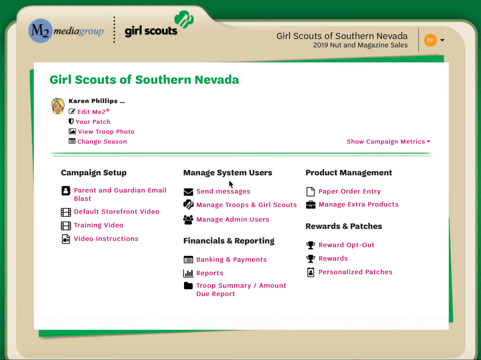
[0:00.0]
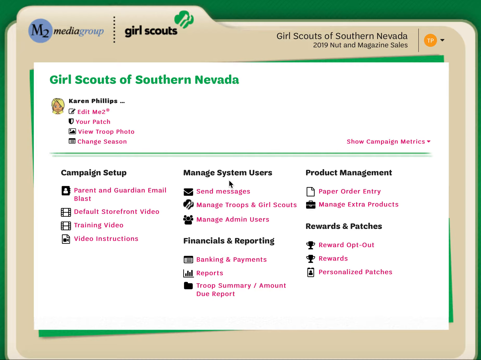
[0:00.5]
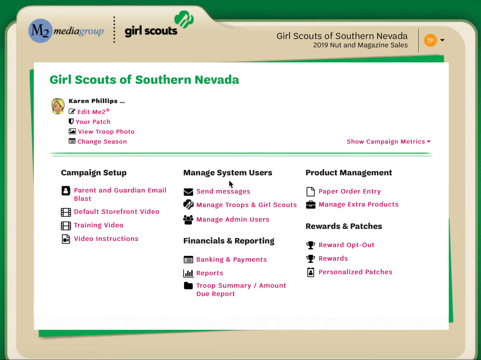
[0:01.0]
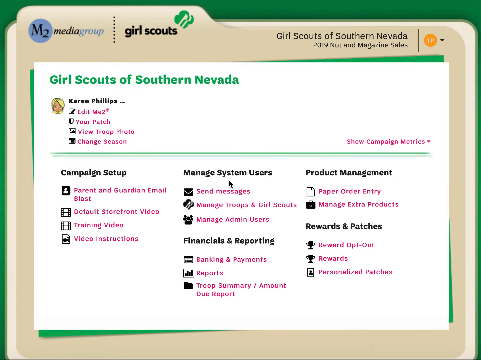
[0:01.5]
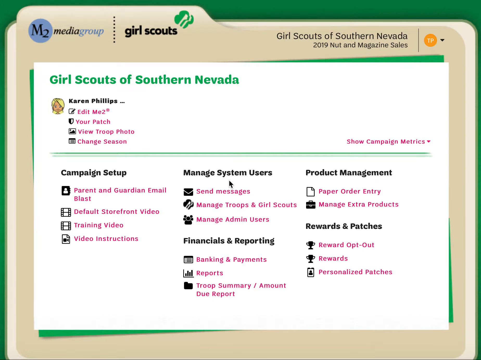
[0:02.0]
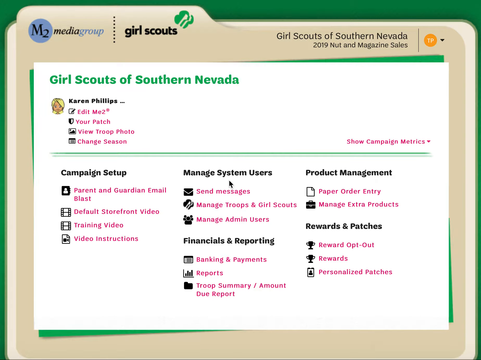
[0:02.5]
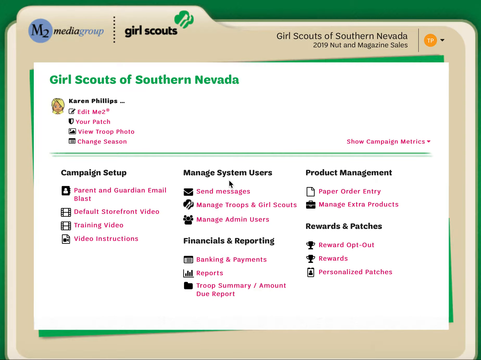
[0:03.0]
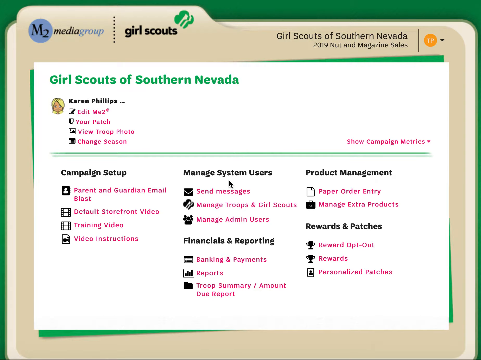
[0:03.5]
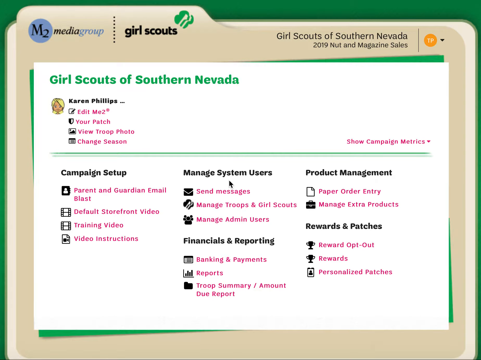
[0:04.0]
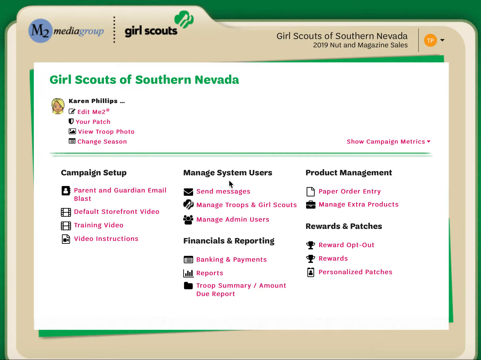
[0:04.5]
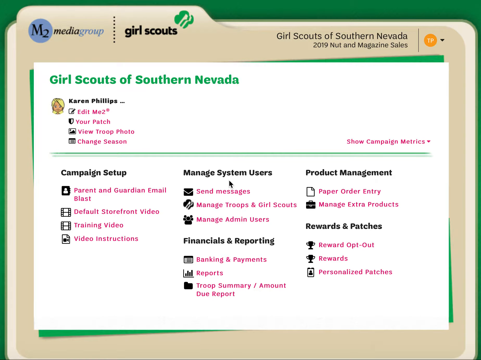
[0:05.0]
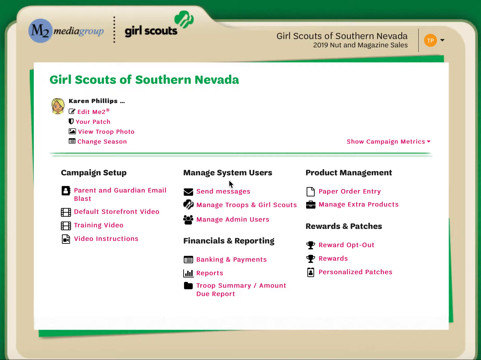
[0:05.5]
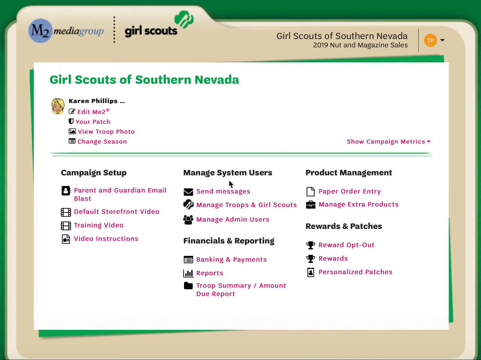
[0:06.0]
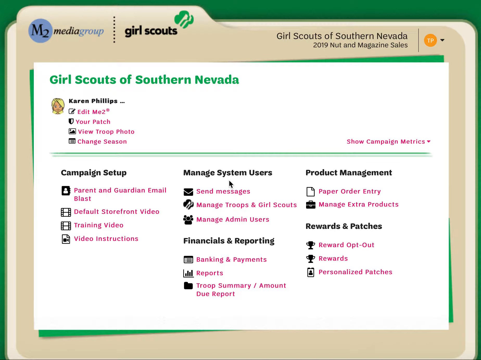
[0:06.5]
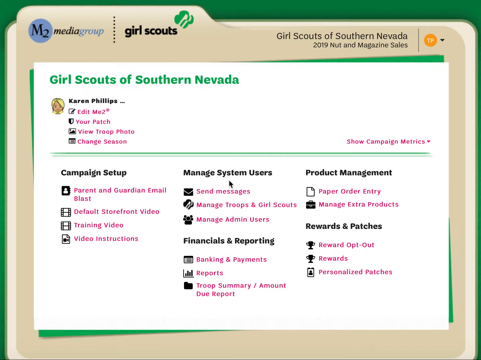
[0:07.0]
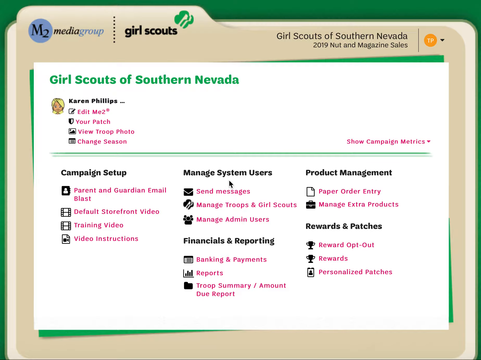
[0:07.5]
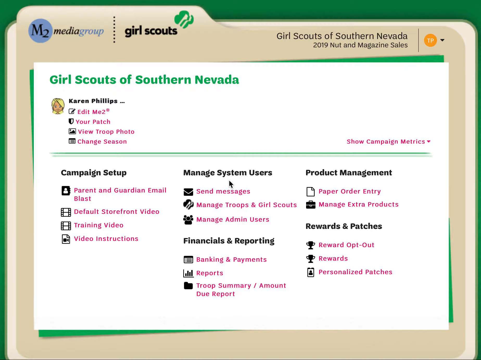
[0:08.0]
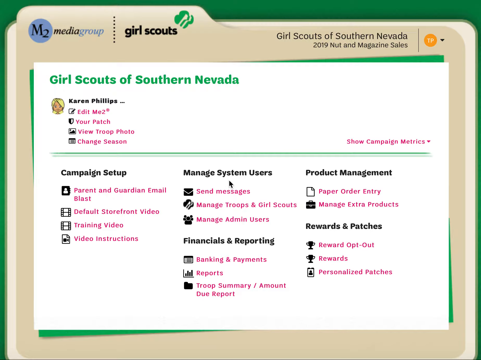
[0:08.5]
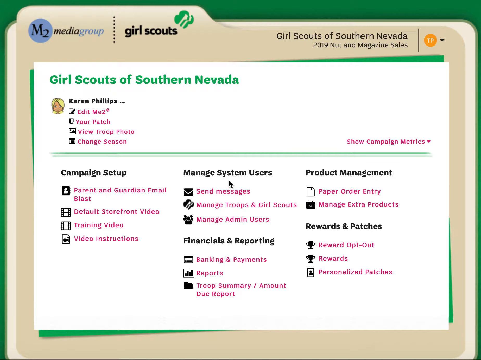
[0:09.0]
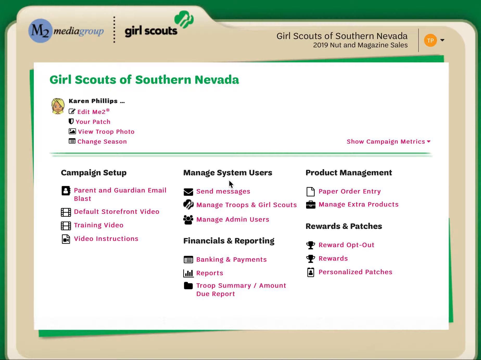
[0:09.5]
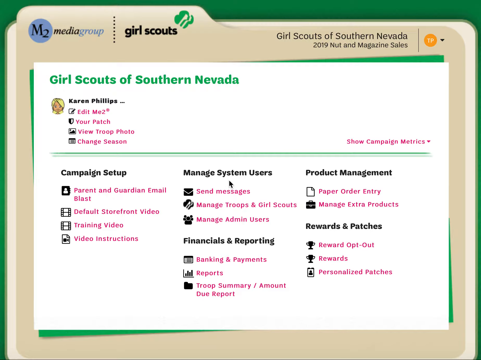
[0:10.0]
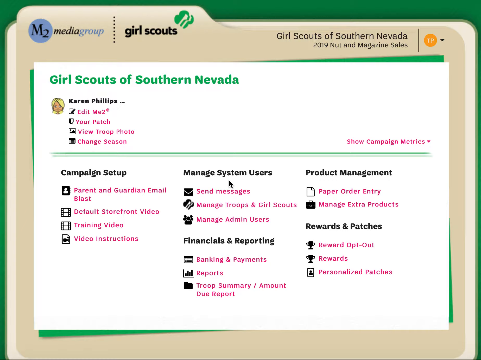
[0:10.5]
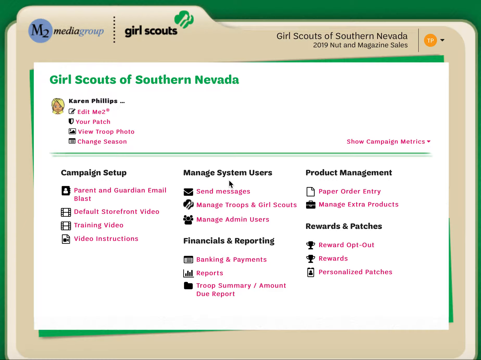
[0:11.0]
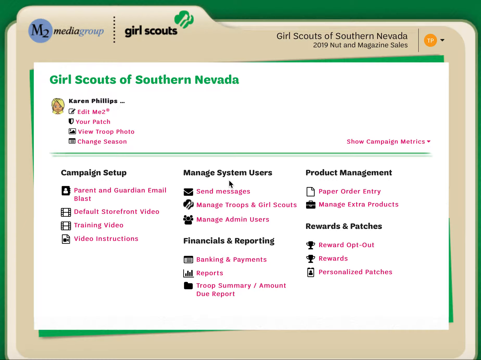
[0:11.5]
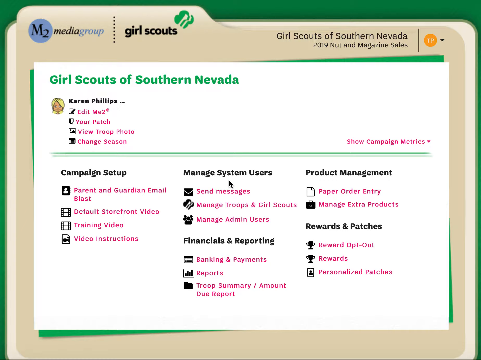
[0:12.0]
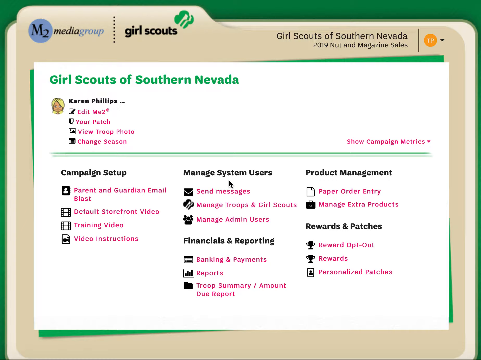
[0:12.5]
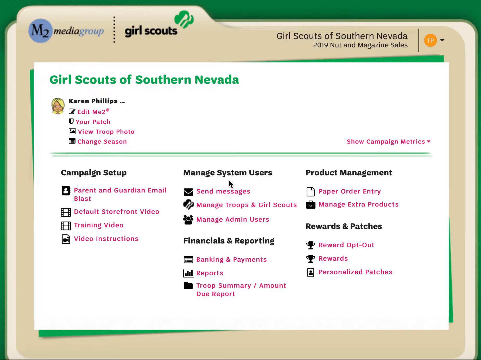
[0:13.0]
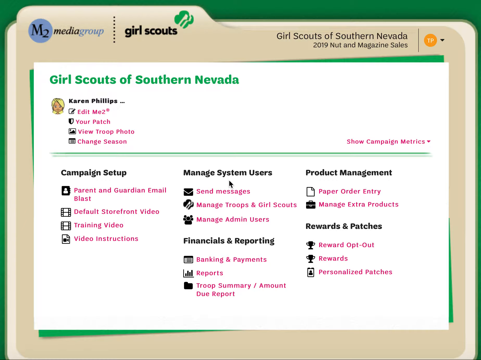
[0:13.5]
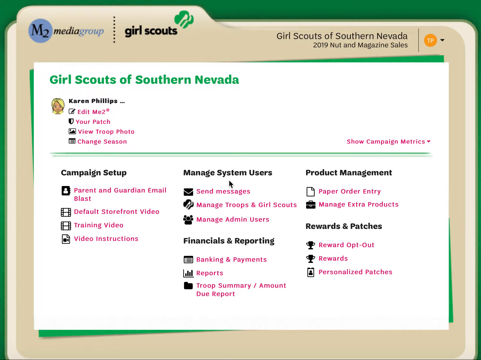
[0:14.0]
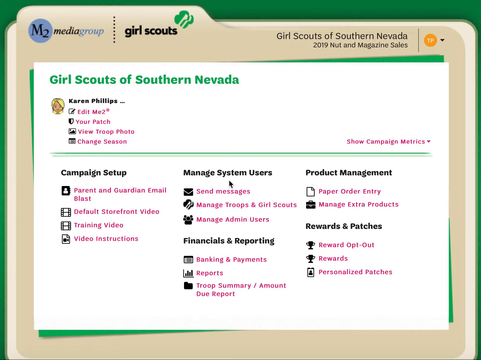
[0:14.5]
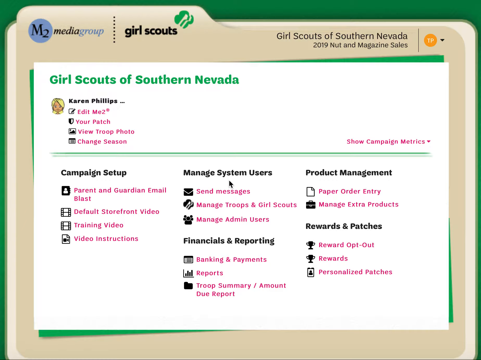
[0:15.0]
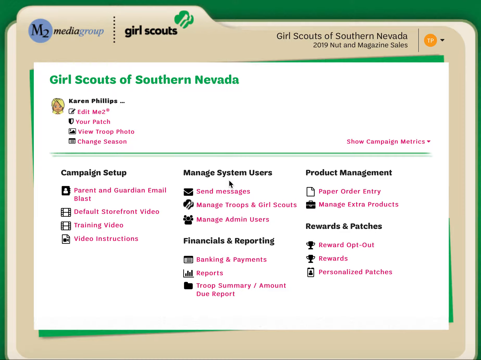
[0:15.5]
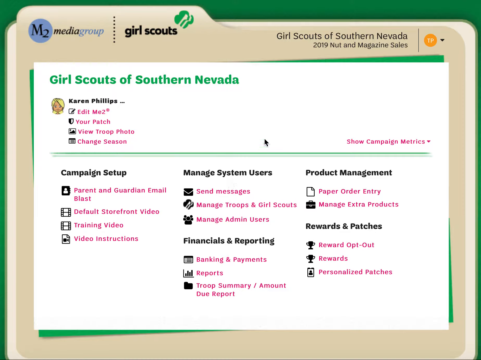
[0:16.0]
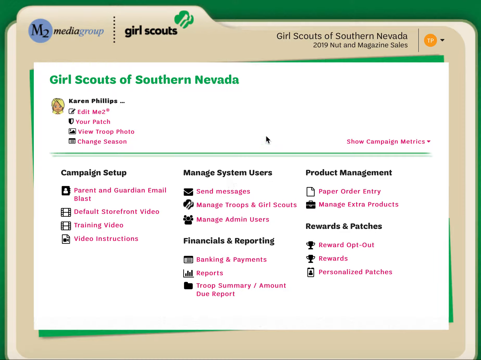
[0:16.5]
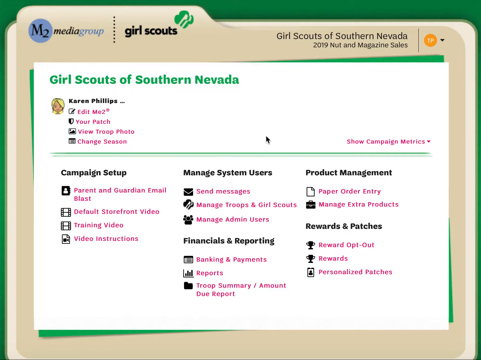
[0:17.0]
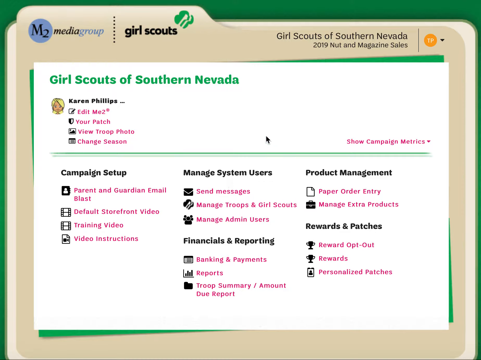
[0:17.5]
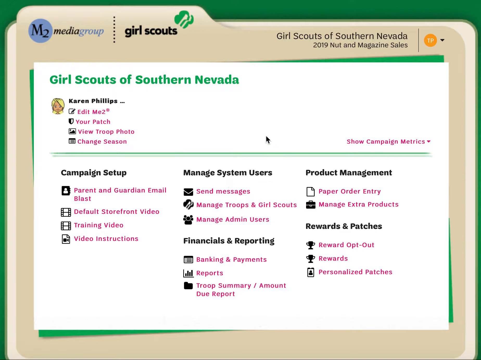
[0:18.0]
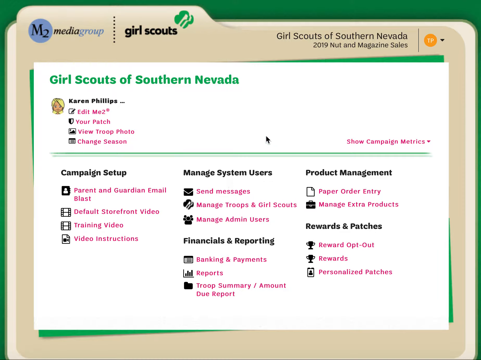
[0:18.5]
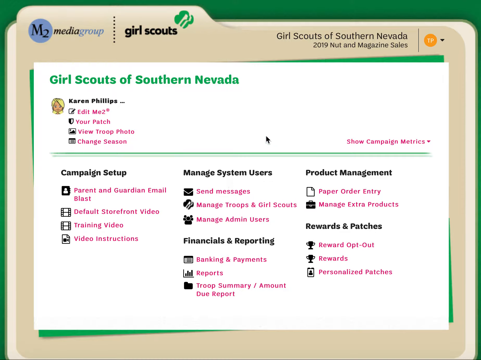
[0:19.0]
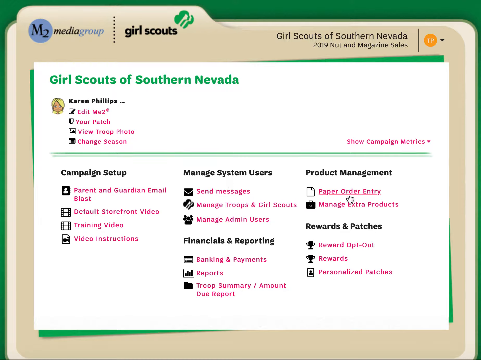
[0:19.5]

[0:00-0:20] A large folder fills the background, and many boxes of text are written over it. On top of the folder there is text in the top left, smaller text in the top right, and a main green title written on a square rectangle in the center middle of the screen. Multiple text options are written small in pink, with smaller subtitles scattered around. The main title reads "Girl Scouts of Nevada". At the top is an M2 Media Group logo, and to the right of it, still in the top right, is a Girl Scouts logo. On the right side another title reads "Girl Scouts of Southern Nevada 2019 nut and magazine sales". Subtitles in the center of the screen read "campaign setup", "manage user systems", "product management" and more. A computer mouse cursor is in the exact center of the screen; it moves slightly from the middle to the right side, hovering over a link.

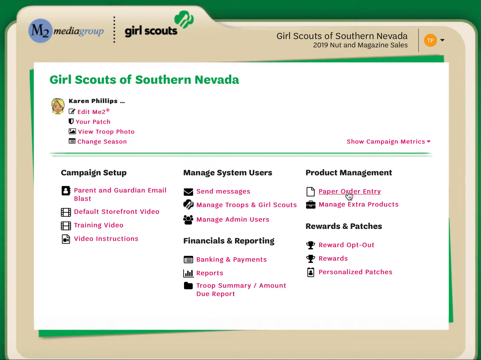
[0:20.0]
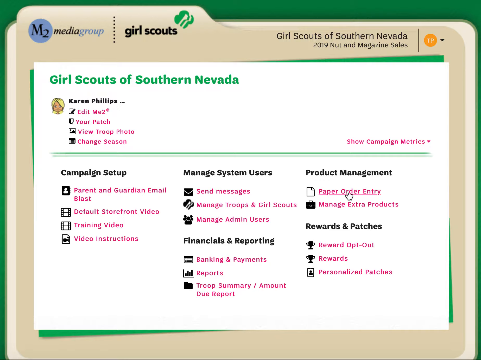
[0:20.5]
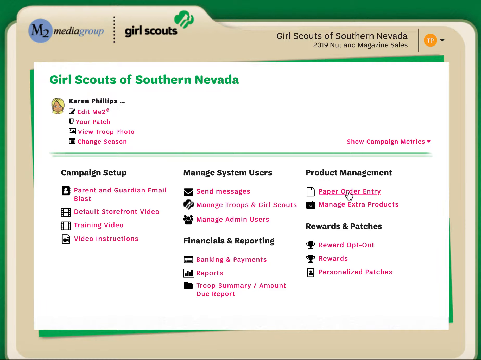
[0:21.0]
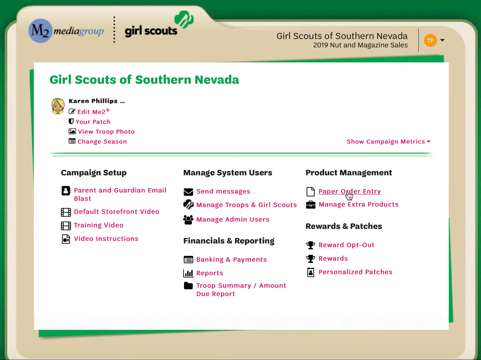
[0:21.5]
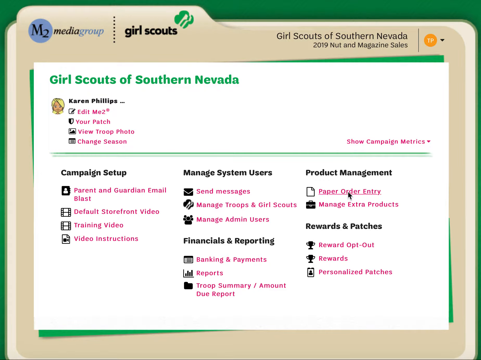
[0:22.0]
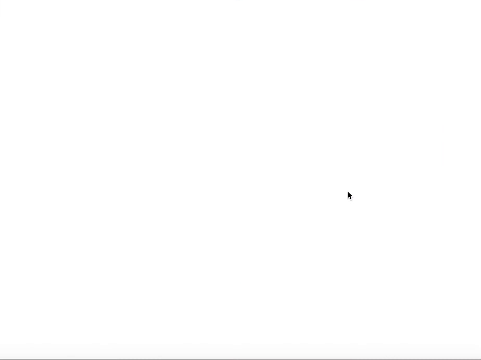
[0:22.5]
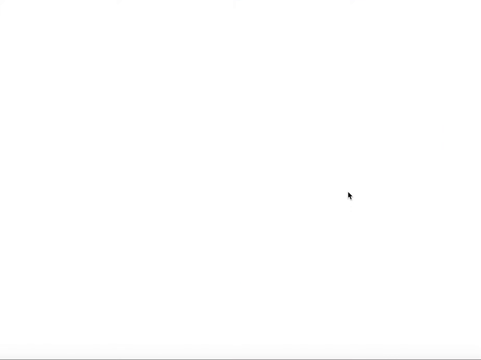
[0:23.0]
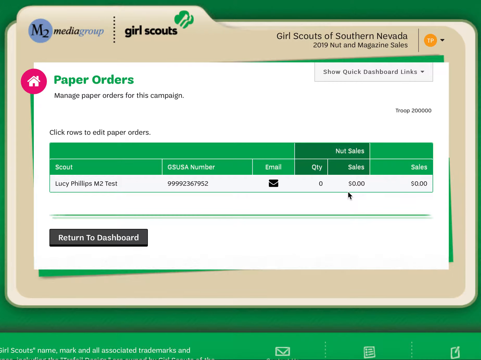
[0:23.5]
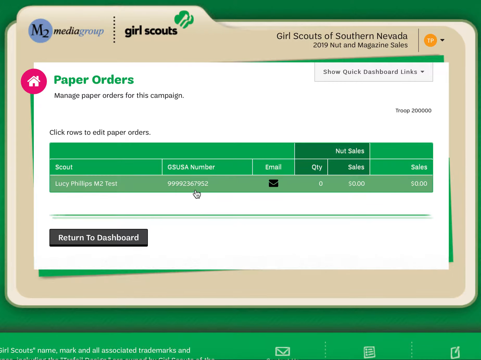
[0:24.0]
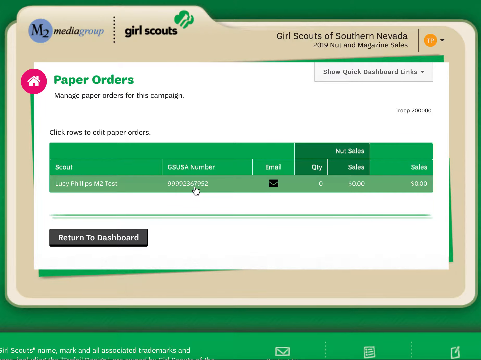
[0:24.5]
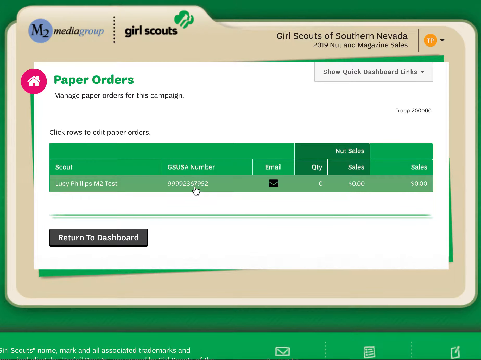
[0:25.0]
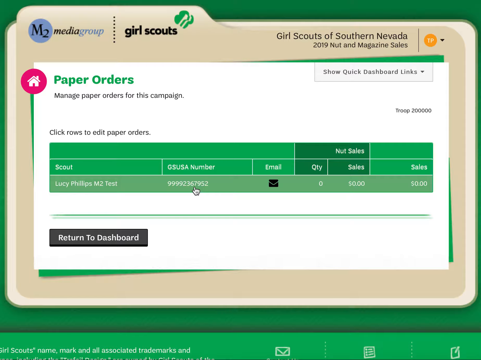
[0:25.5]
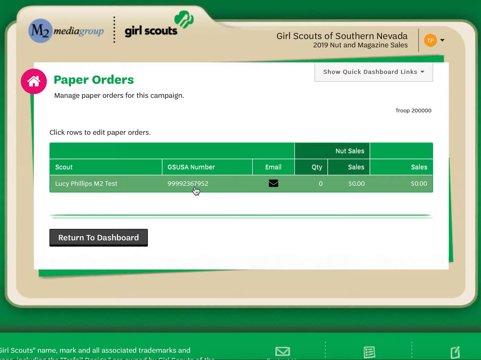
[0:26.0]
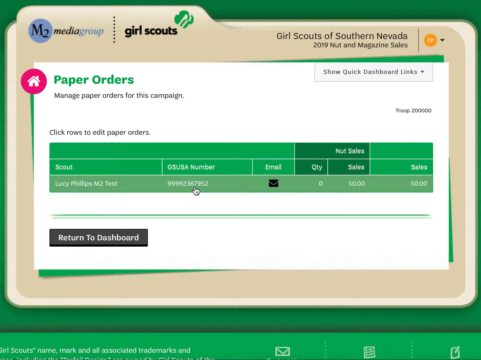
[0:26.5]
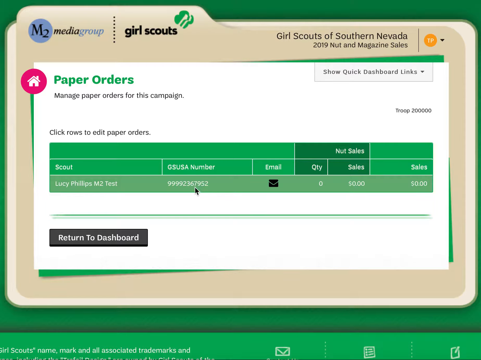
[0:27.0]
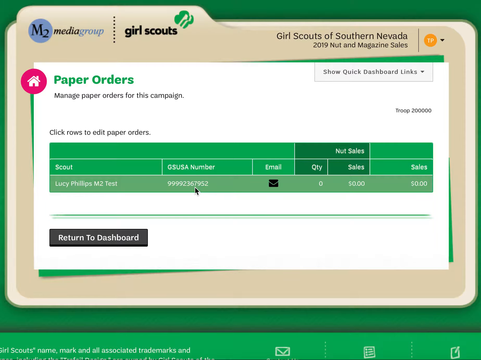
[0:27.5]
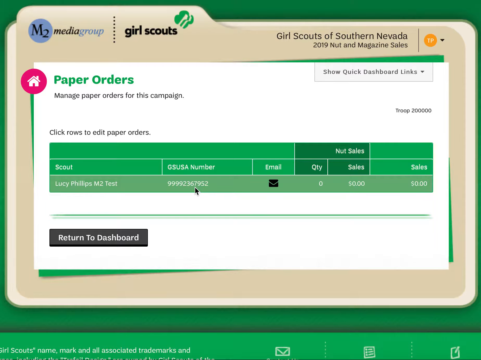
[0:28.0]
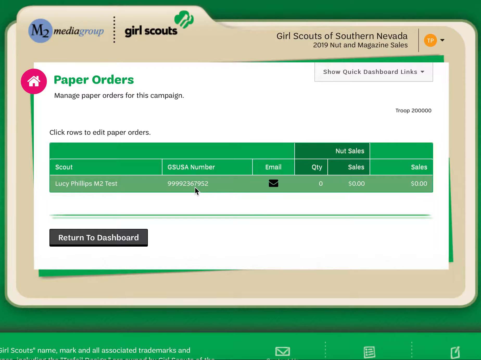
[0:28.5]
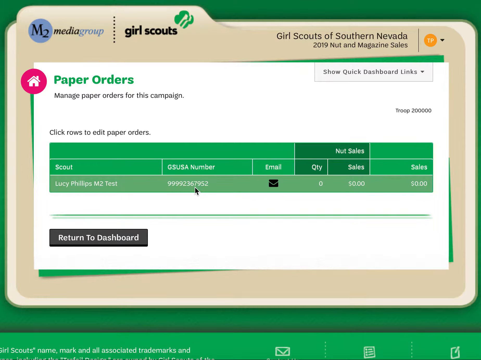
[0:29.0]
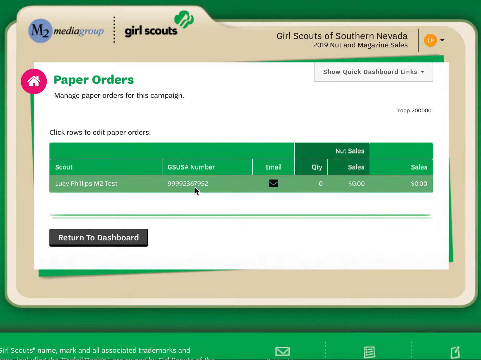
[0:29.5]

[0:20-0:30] A new page loads, showing "paper orders" in the top left. The page background is white, and there is a green chart in the middle. The chart displays "nut sales" in the centre along with multiple numbers. The words "email", "quantity", "sales" and "scout" are written, along with numbers and headers. In the bottom left of the page, "return to dashboard" is written in dark grey. The graph is light green with part of it dark green, and the top subtitle is also light green.